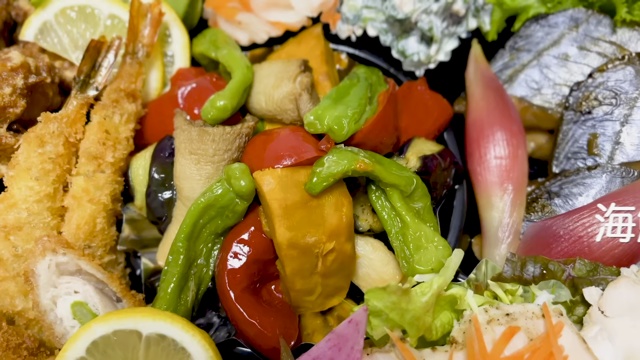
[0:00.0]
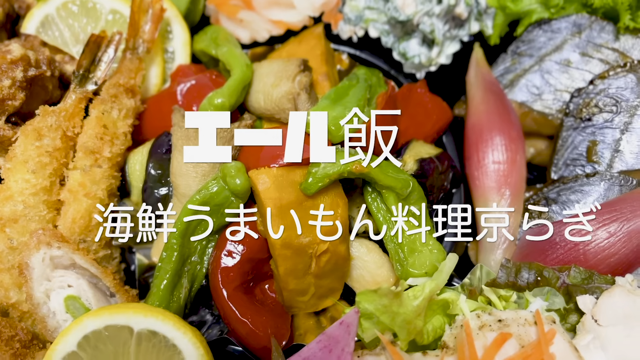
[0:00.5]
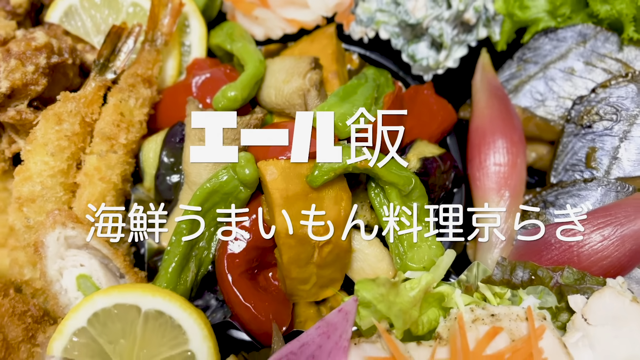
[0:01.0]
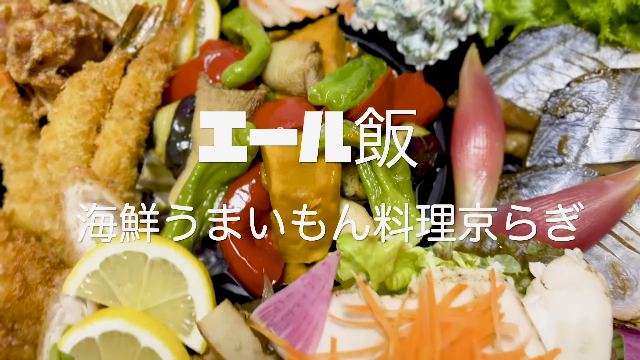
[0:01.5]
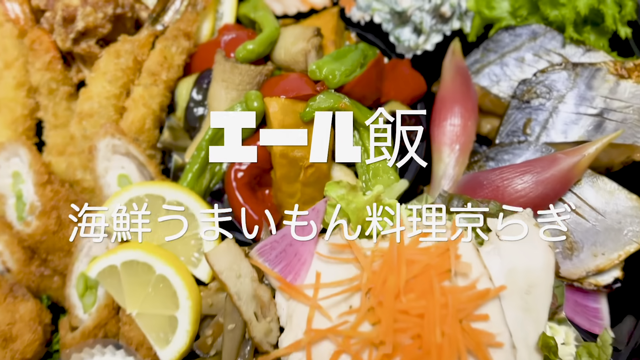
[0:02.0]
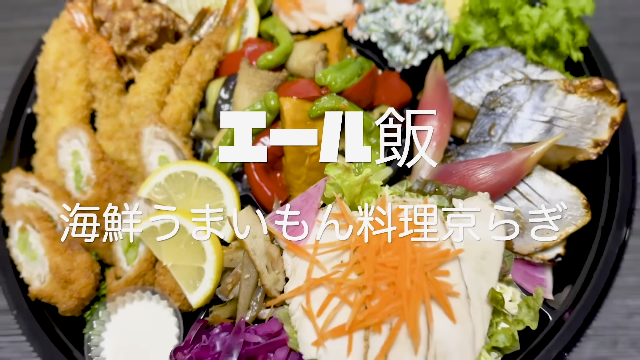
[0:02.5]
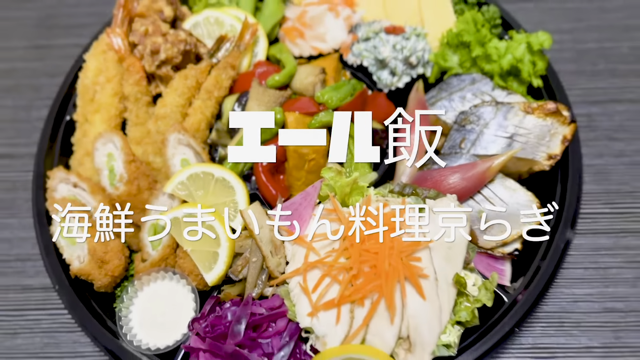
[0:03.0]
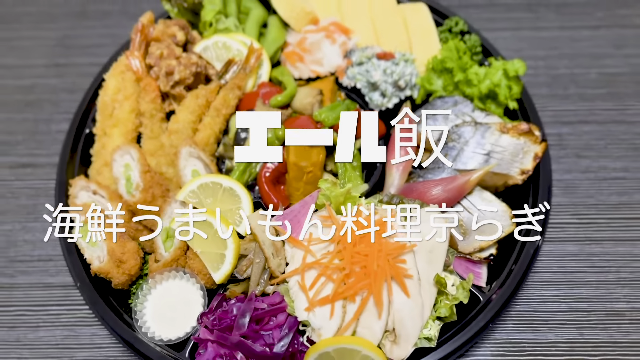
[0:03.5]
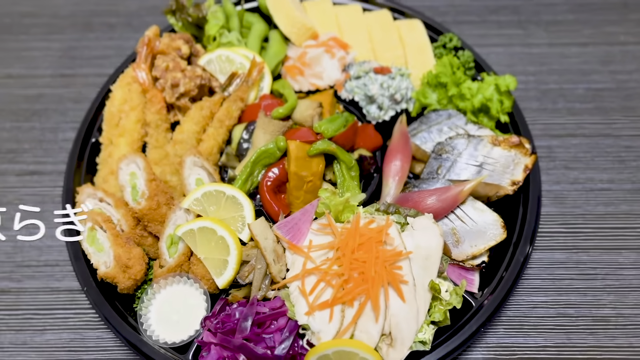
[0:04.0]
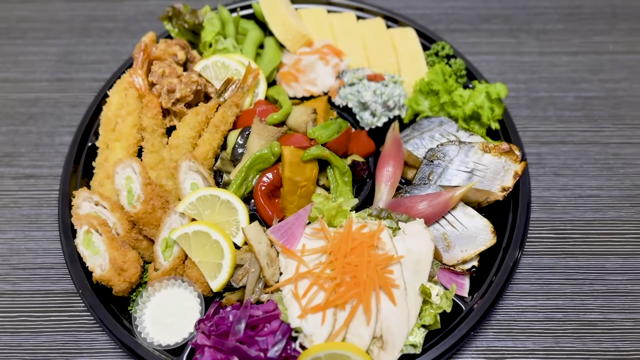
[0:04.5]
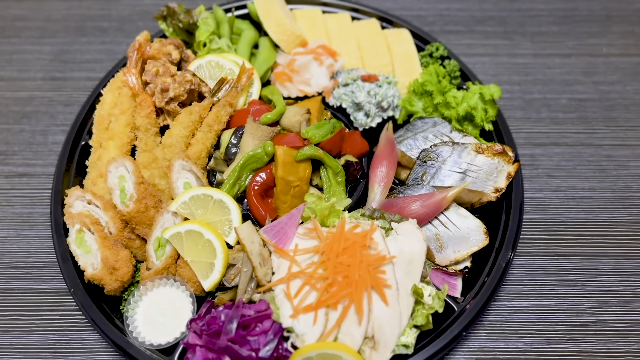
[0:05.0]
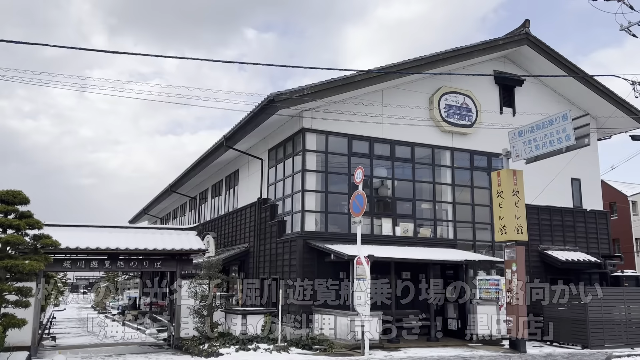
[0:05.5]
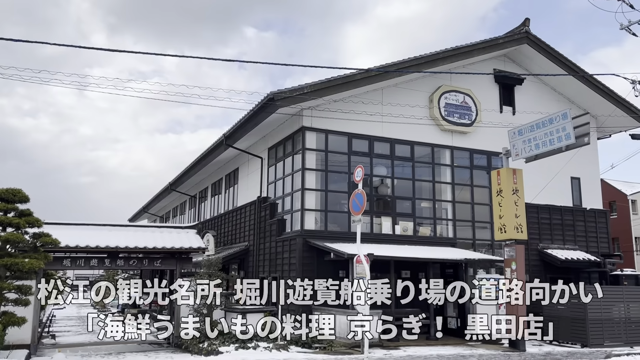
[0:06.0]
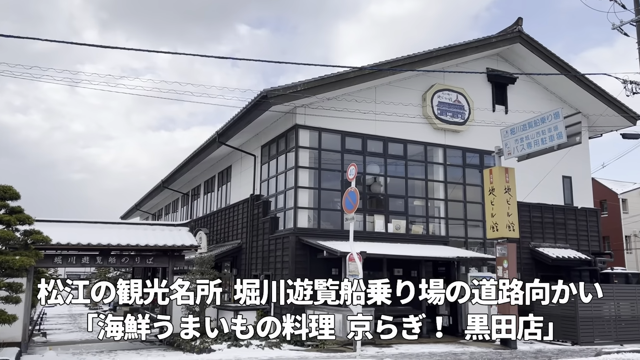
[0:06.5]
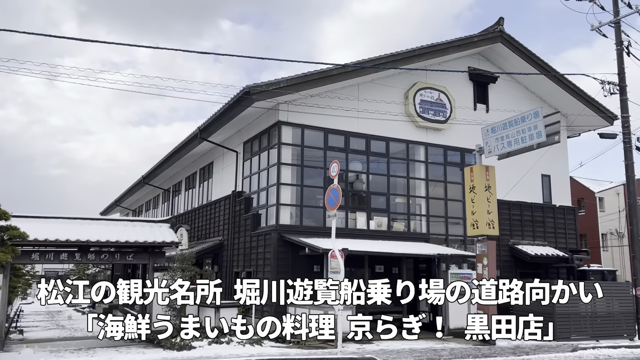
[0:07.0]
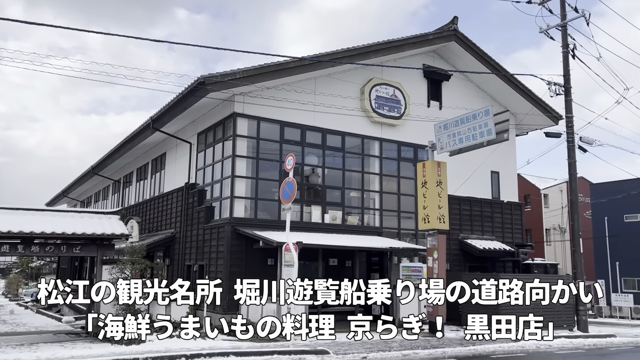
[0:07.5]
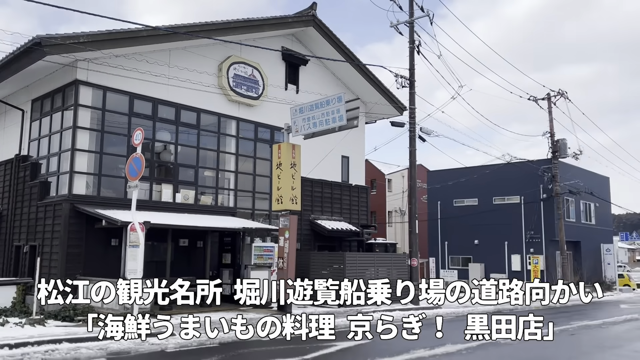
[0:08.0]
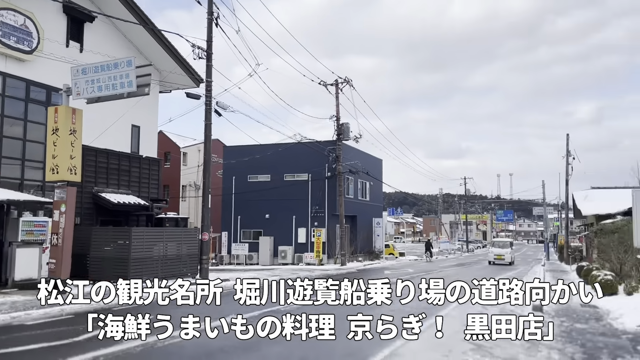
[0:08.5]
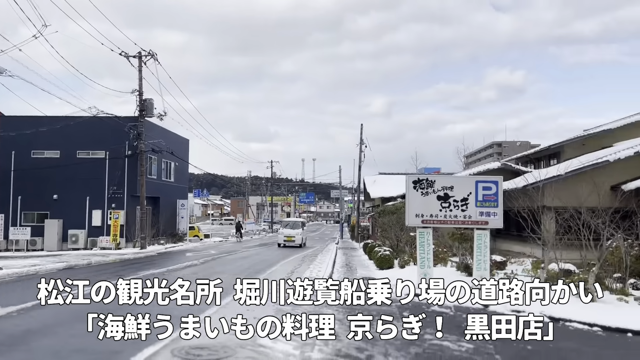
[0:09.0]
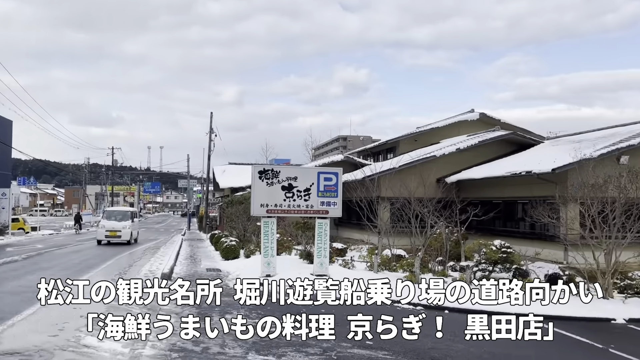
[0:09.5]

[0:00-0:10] Japanese text appears on the screen over a background of food that includes what may be green peppers, along with red peppers, red onions, fish, lettuce, fried shrimp, lemon slices and carrot slices. The camera slowly zooms out to reveal the plate the food is on, which someone is having. The video then cuts to more Japanese or Chinese text at the bottom of the screen. A white building with a lot of glass windows appears, and the camera zooms to the right, showing a busy street under a clear blue sky.